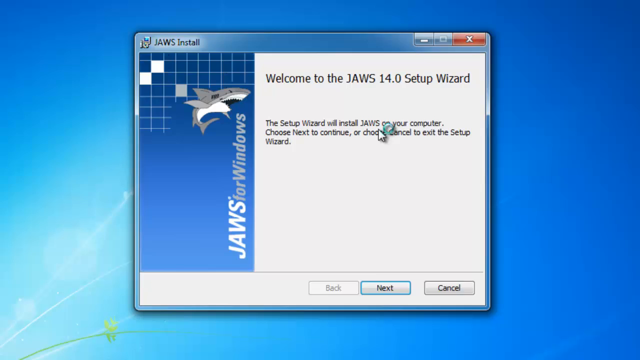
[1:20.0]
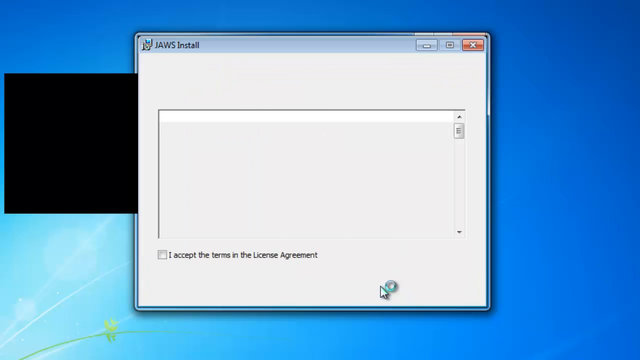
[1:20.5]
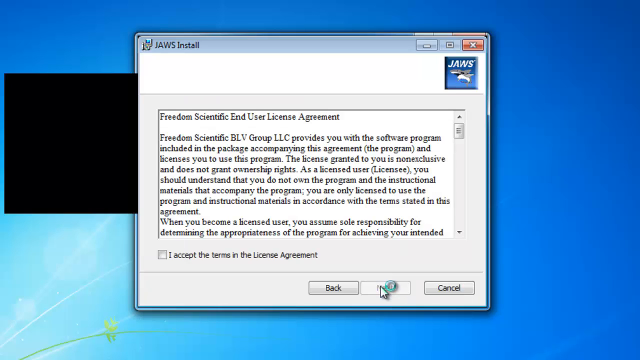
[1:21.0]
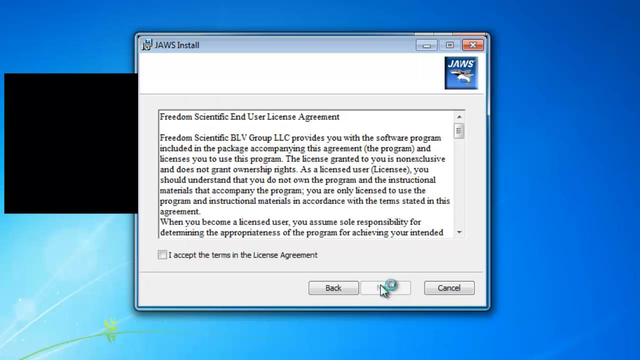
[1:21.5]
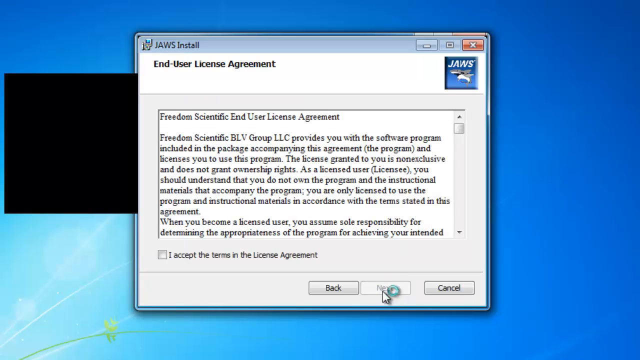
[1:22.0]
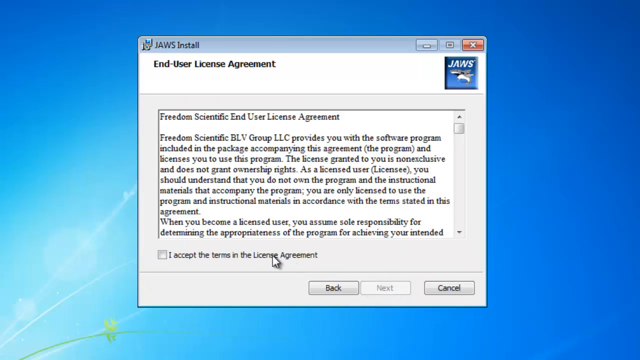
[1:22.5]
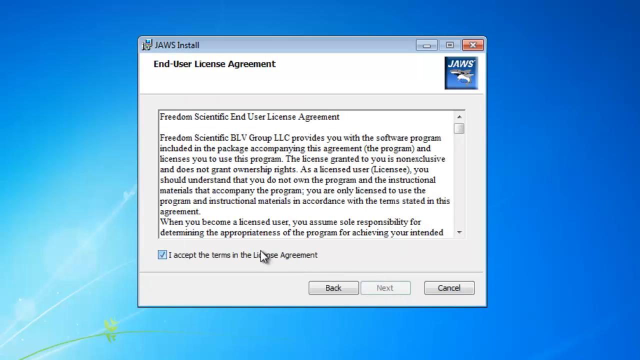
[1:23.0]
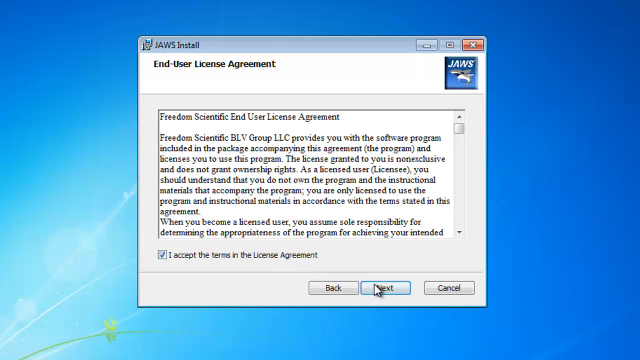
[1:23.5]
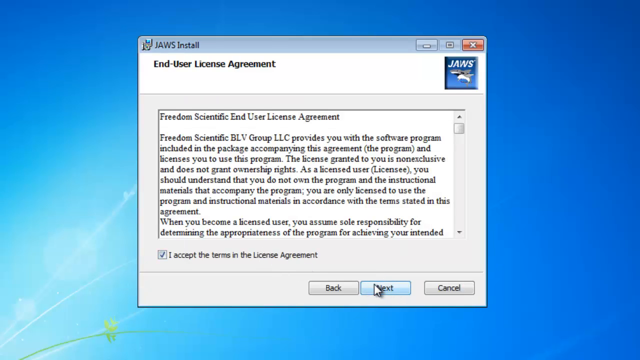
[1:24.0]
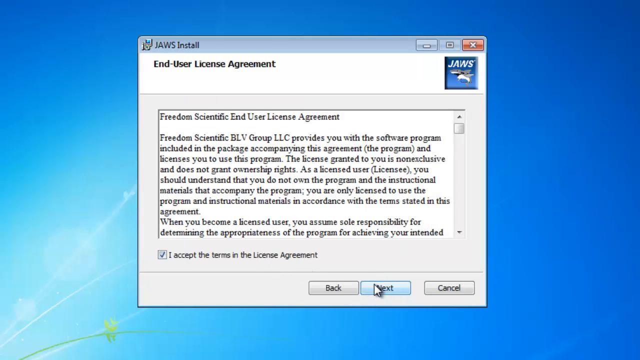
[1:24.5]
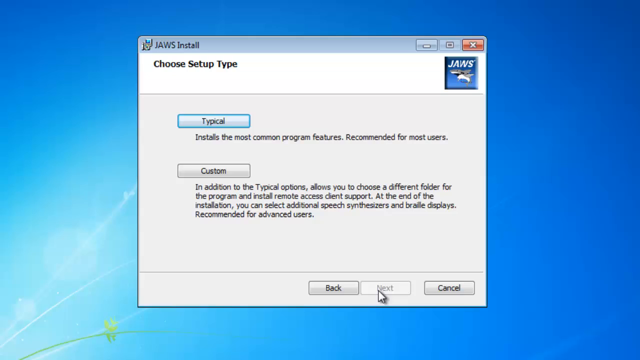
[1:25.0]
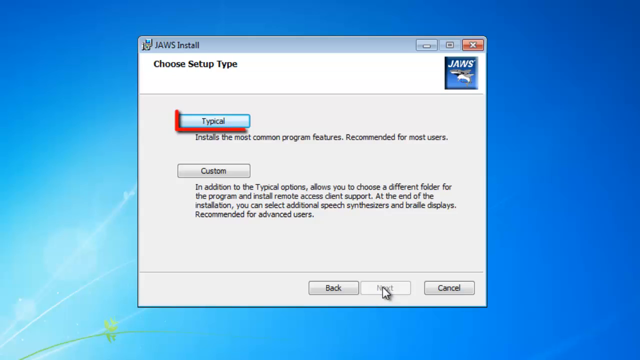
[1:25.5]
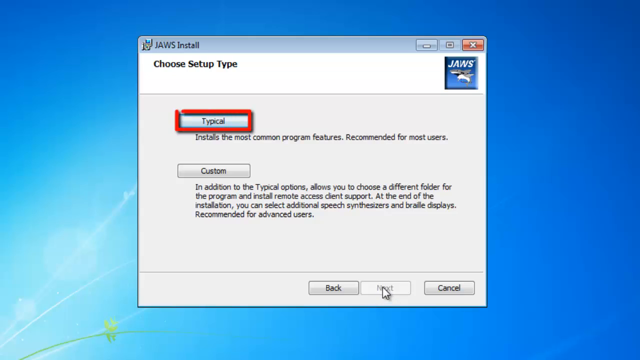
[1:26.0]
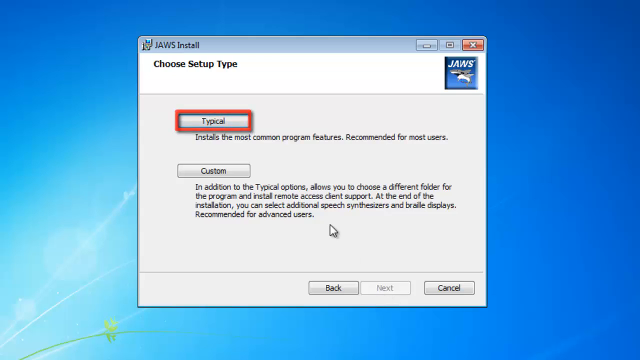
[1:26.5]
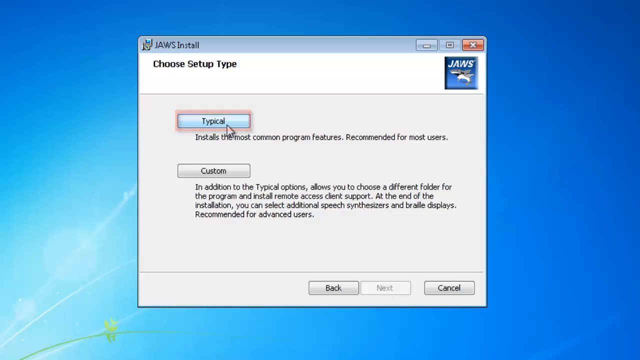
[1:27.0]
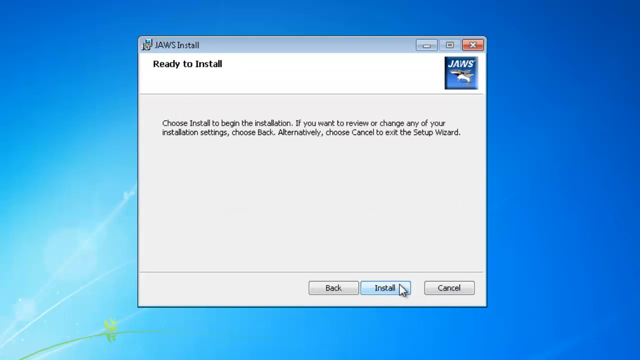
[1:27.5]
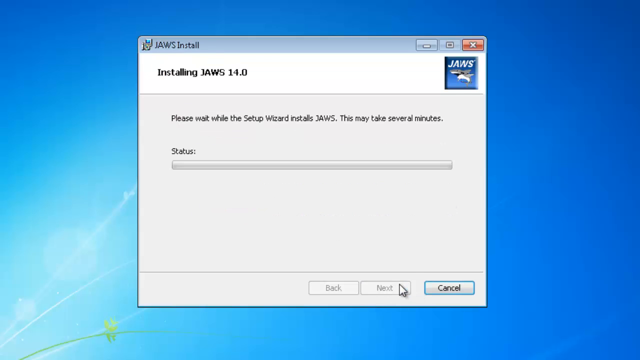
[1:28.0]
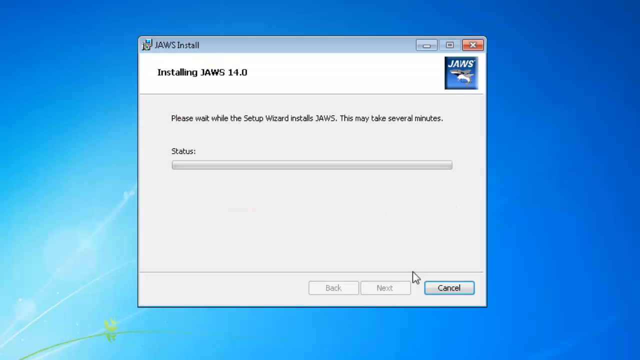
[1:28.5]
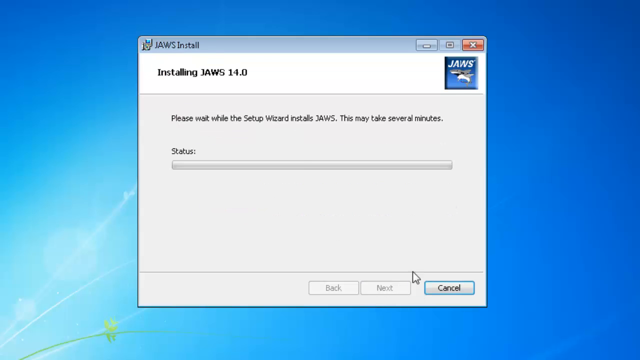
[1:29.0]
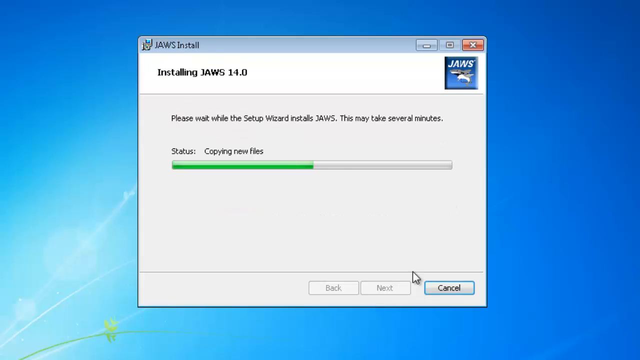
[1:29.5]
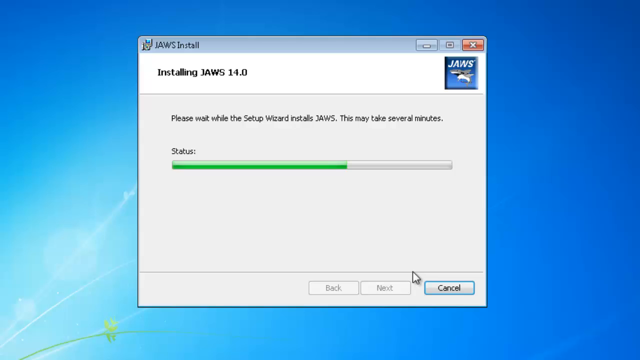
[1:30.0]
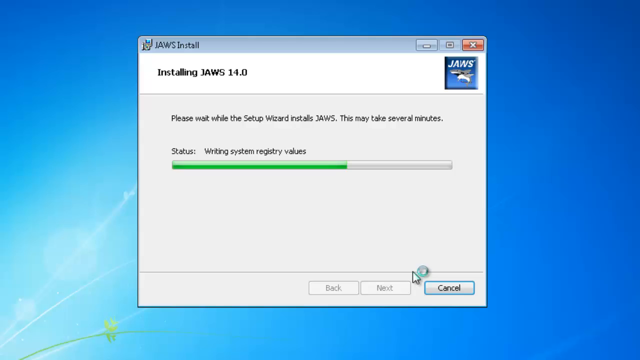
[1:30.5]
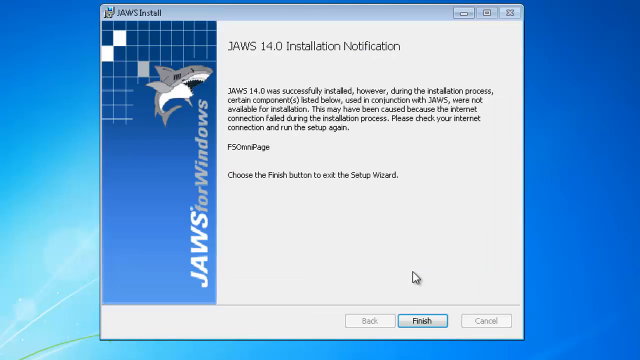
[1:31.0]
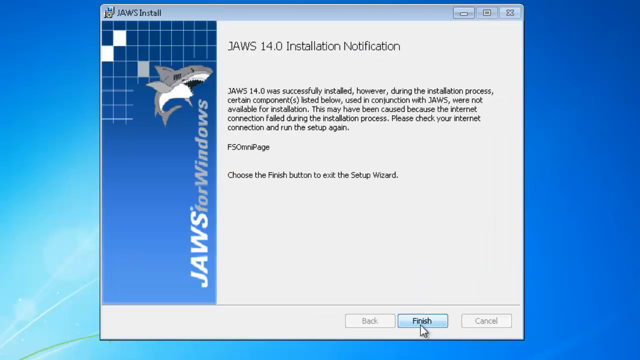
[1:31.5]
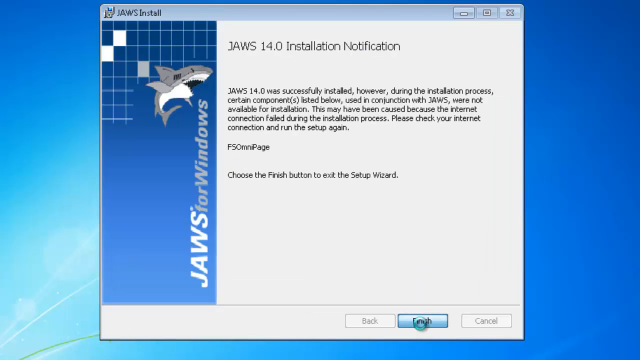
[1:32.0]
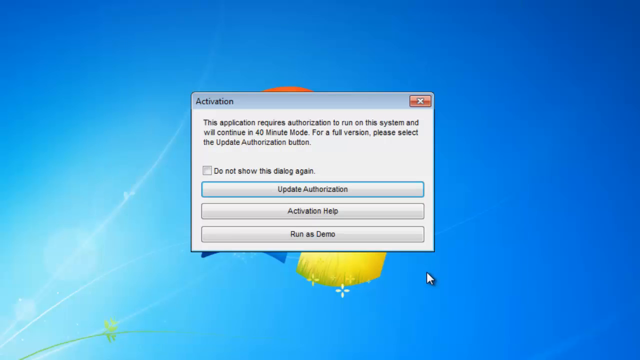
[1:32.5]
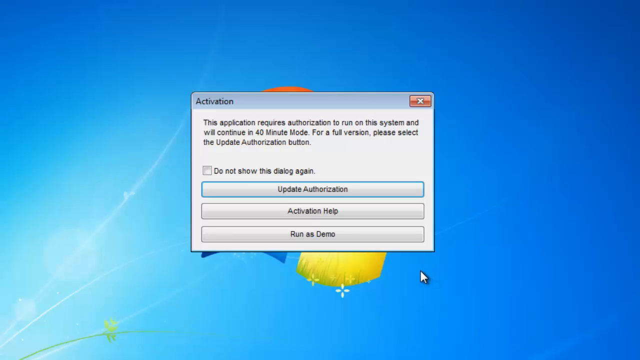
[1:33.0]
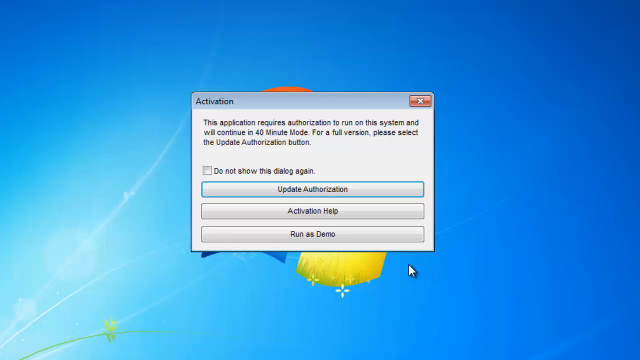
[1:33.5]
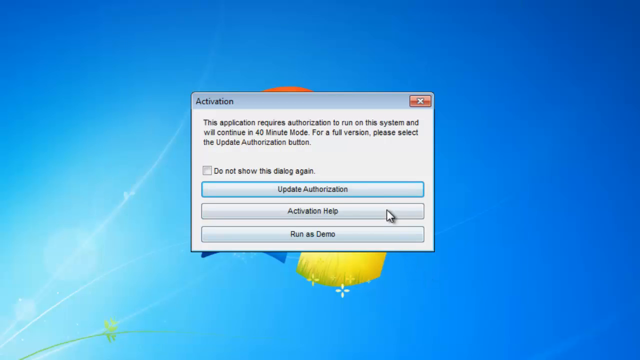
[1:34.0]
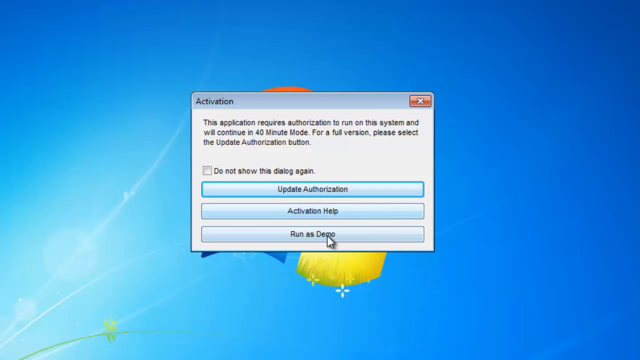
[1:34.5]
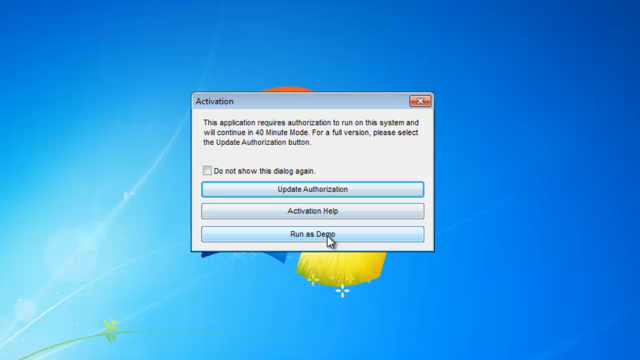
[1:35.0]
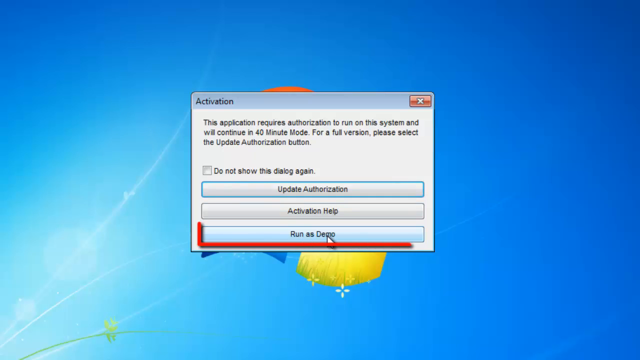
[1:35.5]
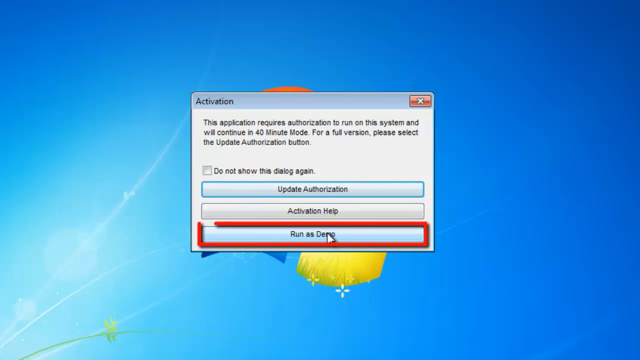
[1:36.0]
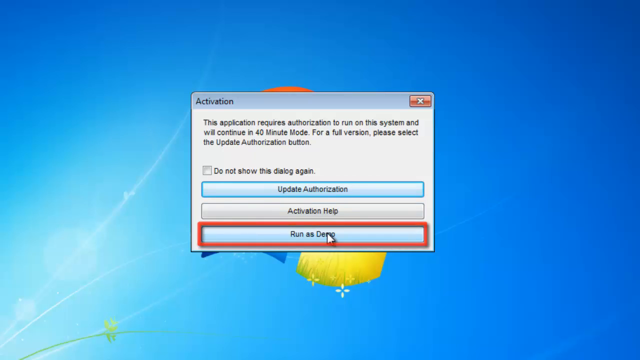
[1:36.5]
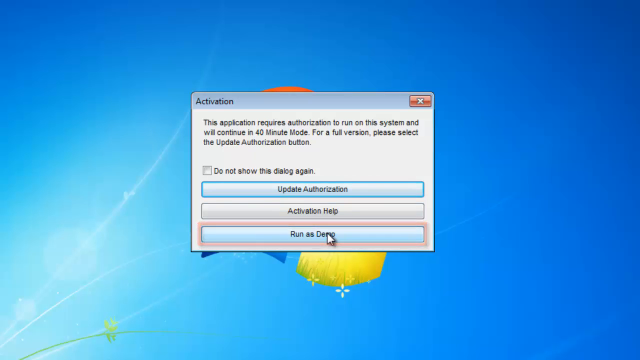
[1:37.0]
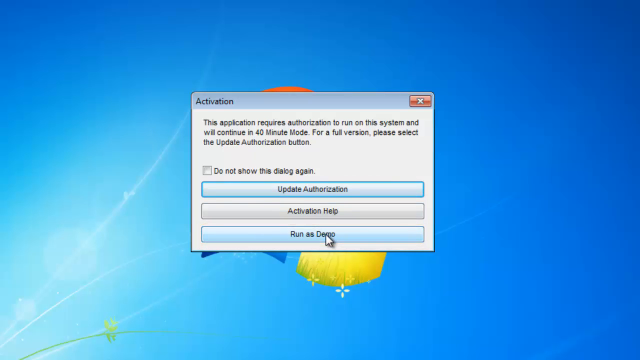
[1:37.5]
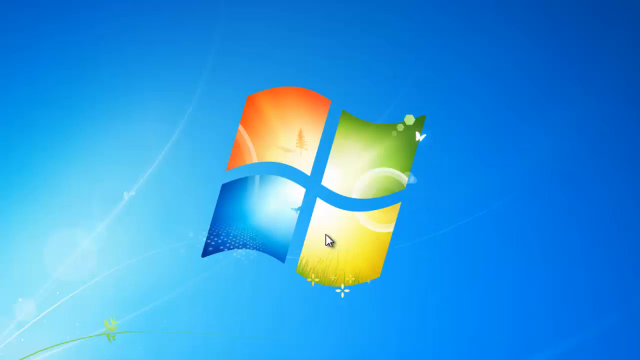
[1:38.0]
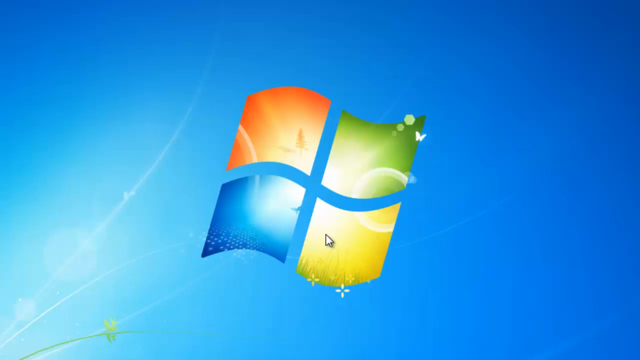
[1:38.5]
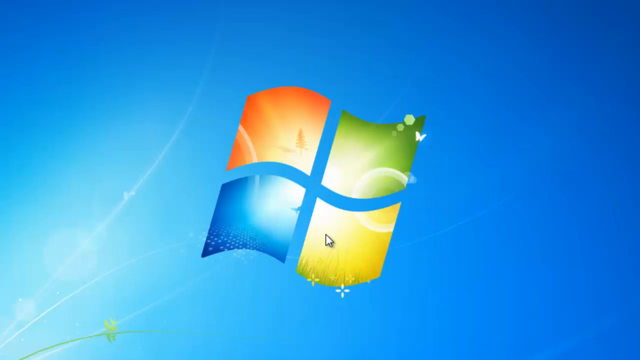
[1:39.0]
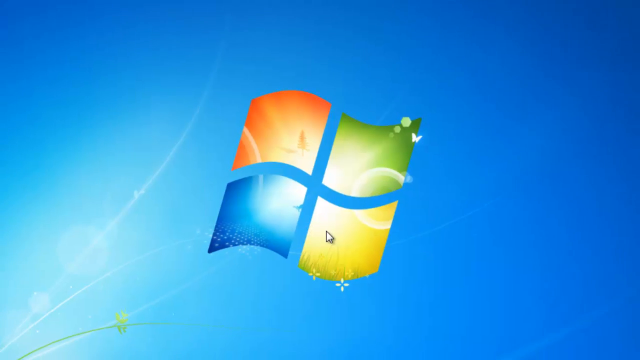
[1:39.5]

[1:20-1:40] The JAWS install pop-up says "welcome to the JAWS 14.0 Setup Wizard. The Setup Wizard will install JAWS on your computer choose next to continue or choose cancel to exit the Setup Wizard". At the bottom are three small rectangular buttons: back, next and cancel. The cursor is in the center of the screen with a teal loading symbol to its right. The user clicks next, bringing up another pop-up window that says "JAWS install", with terms and agreement and a tick box that must be selected to proceed with the install. The text of the user license agreement fills in after a second of loading. The user hovers over the next button, then ticks the acceptance box, returns the cursor to the next button and clicks next to bring up the next screen.